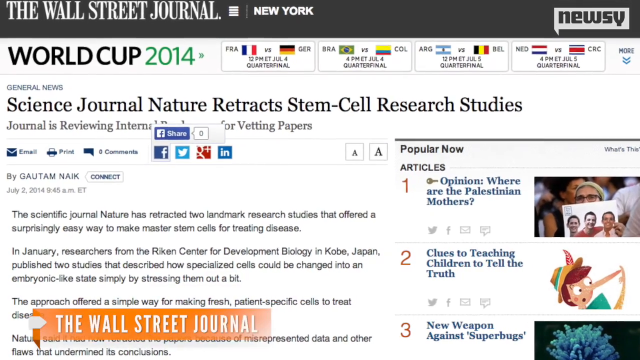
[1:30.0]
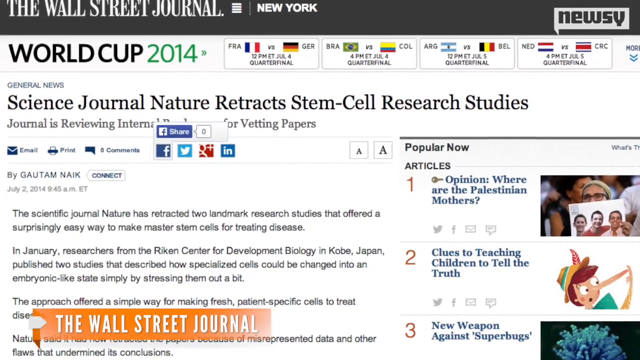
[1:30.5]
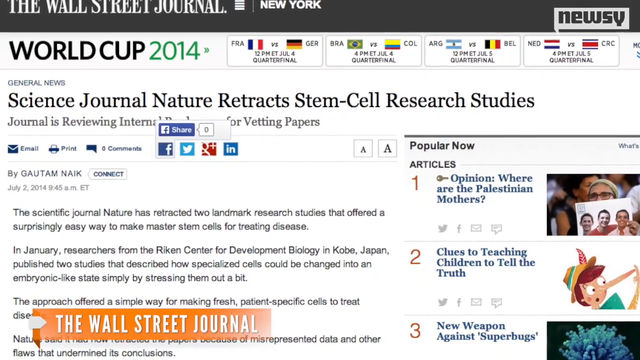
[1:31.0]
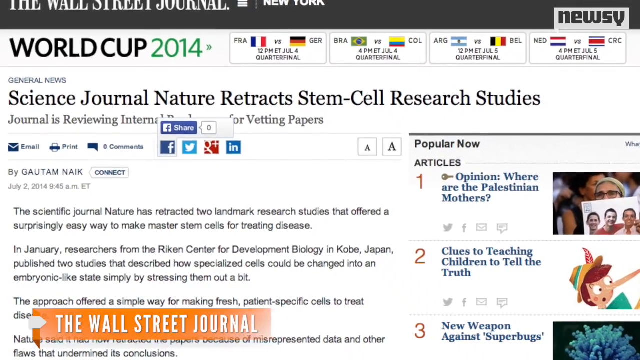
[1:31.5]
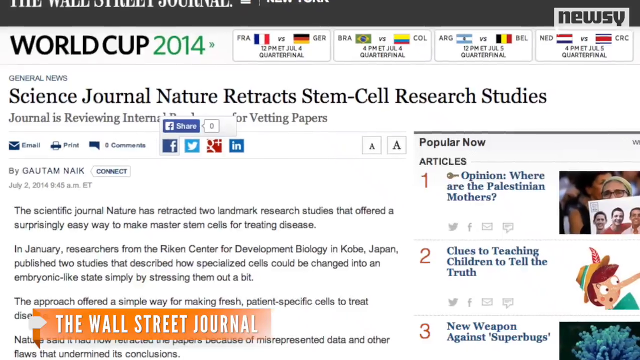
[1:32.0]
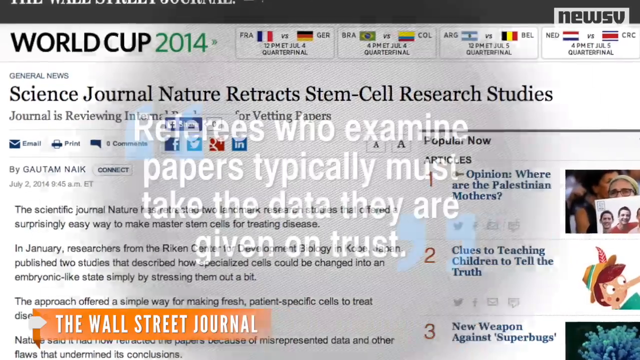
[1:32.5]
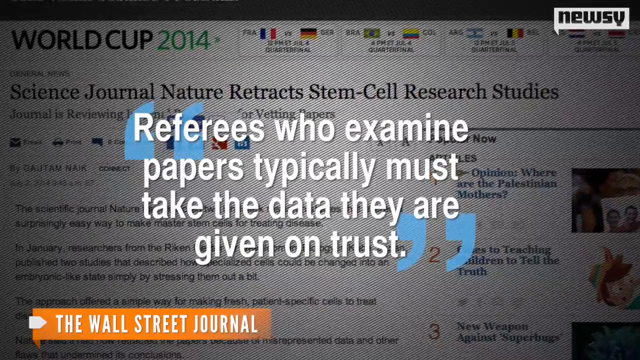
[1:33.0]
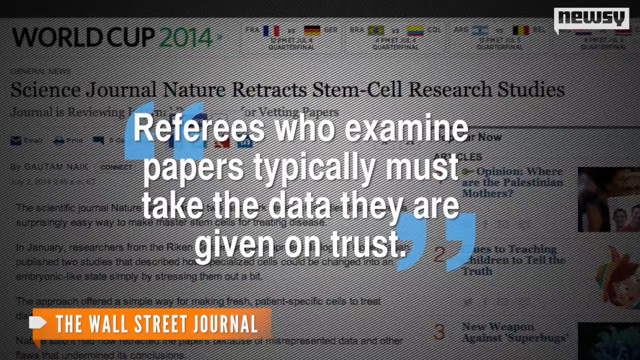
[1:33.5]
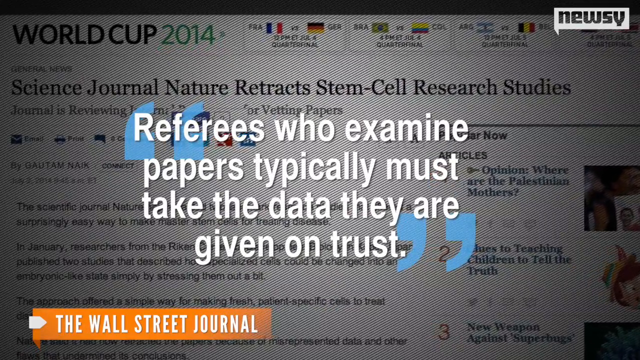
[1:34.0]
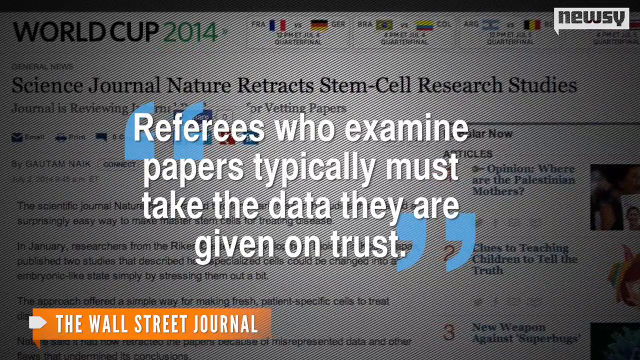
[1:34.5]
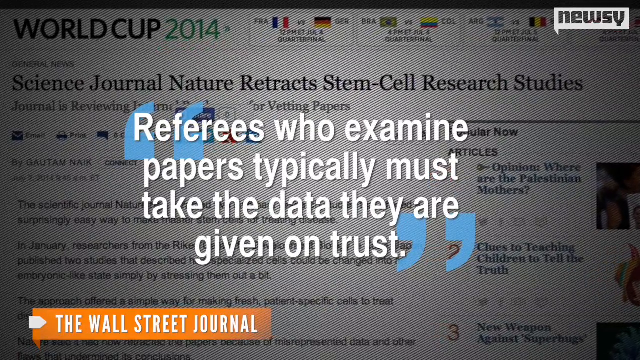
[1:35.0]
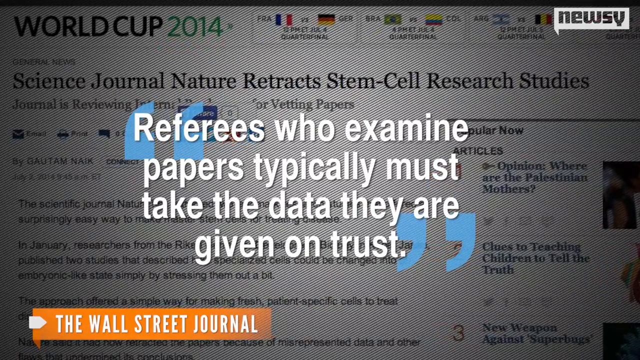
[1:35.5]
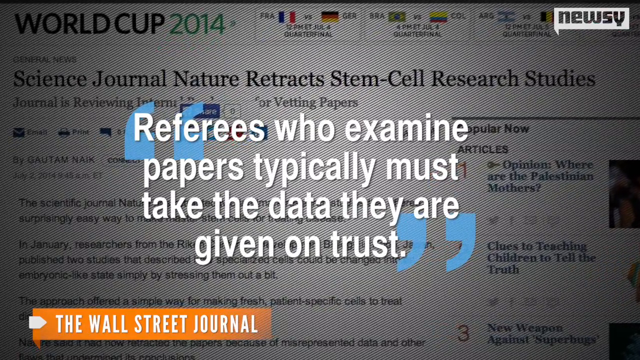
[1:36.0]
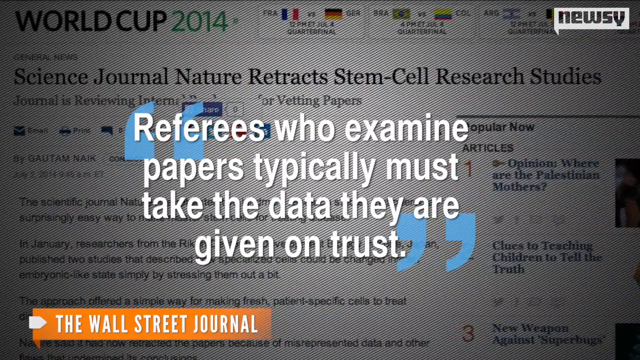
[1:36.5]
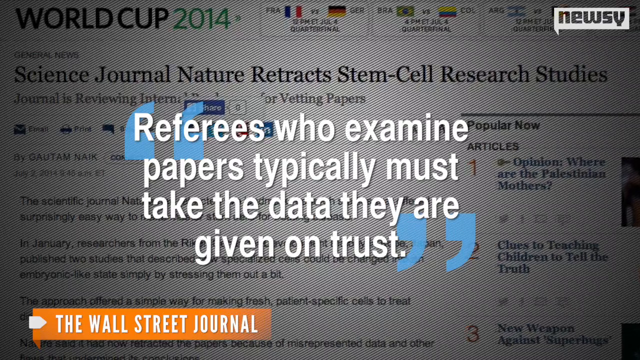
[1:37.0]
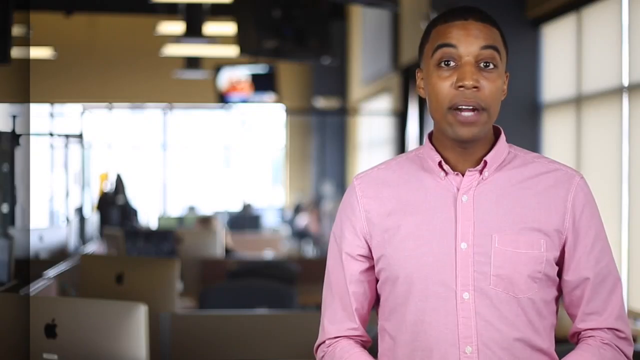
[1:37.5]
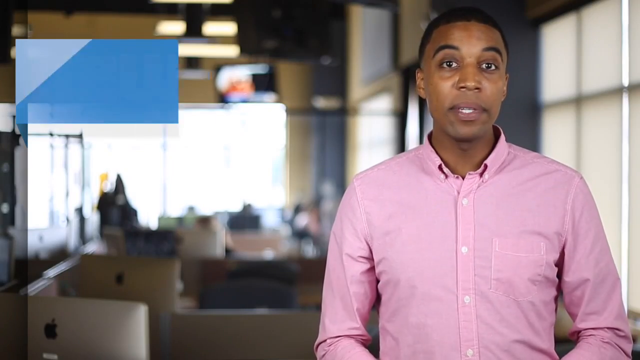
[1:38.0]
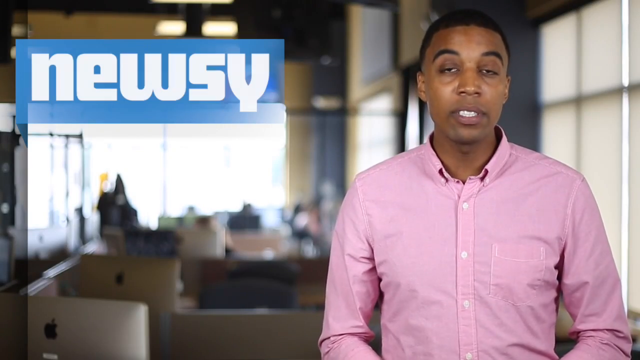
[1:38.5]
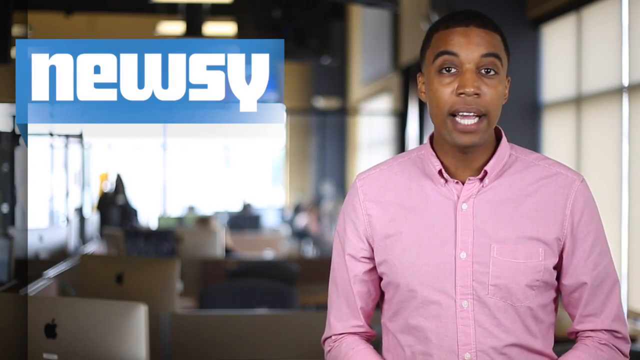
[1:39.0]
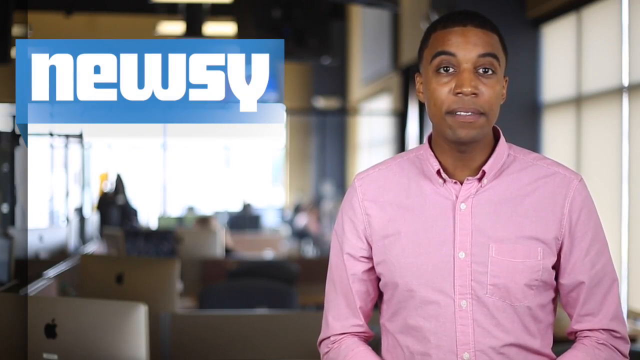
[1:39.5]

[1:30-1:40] An article from the Wall Street Journal appears with the headline "Science Journal Nature retracts stem cell research studies." Its text reads "the scientific journal Nature has retracted two landmark research studies that offered a surprisingly easy way to make master stem cells for treating disease" and "In January, researchers from the Riken Center for Development Biology in Kobe, Japan published two studies that described how specialized cells could be changed." At the end, an African American man in a pink shirt, apparently a news reporter, appears.